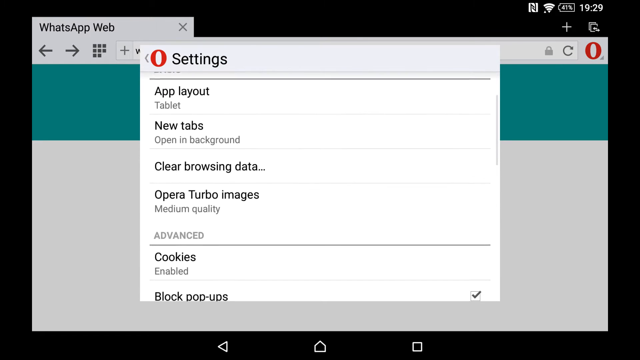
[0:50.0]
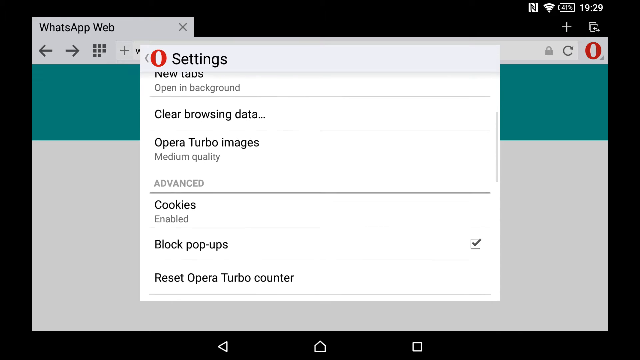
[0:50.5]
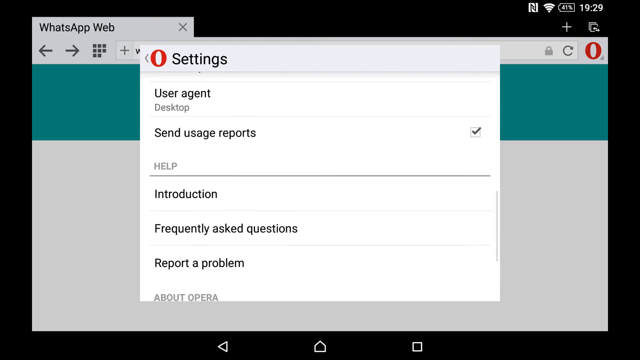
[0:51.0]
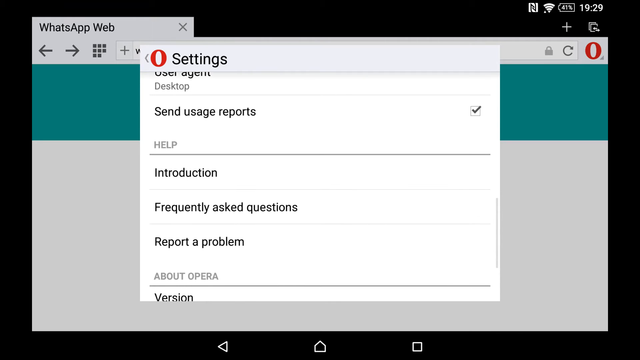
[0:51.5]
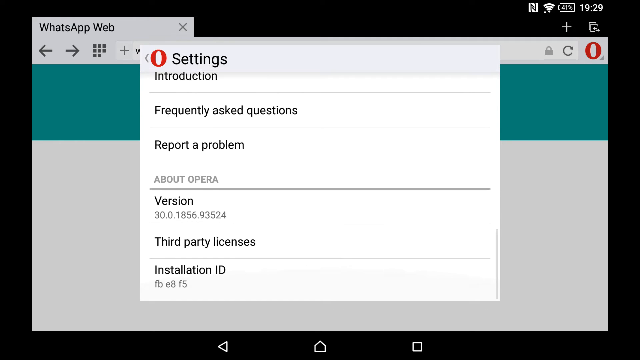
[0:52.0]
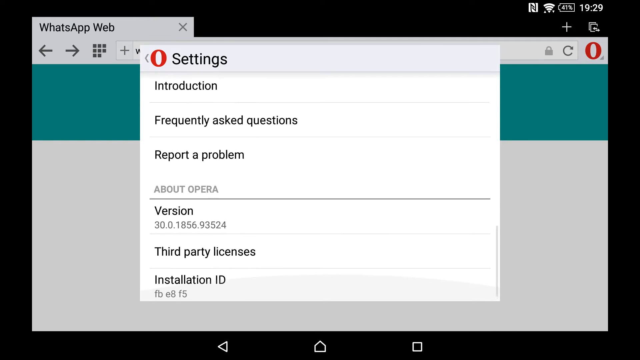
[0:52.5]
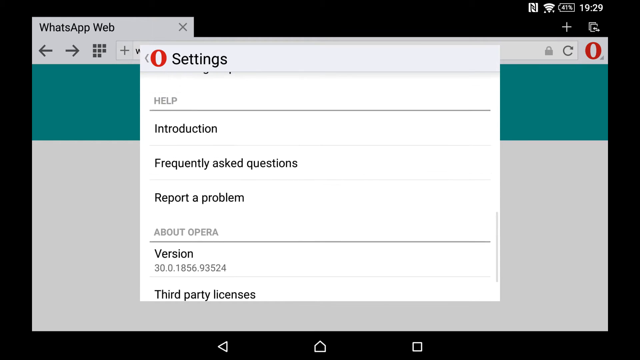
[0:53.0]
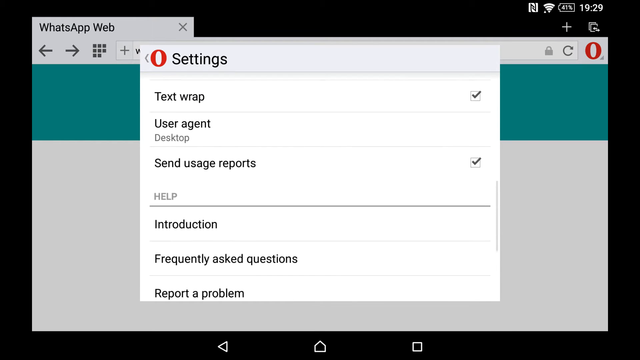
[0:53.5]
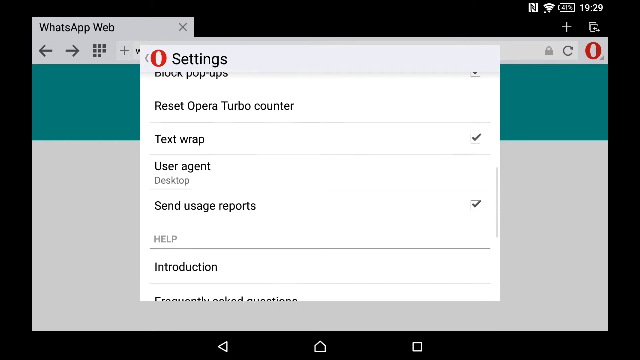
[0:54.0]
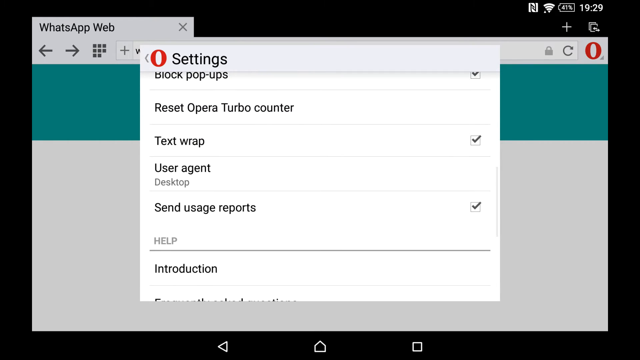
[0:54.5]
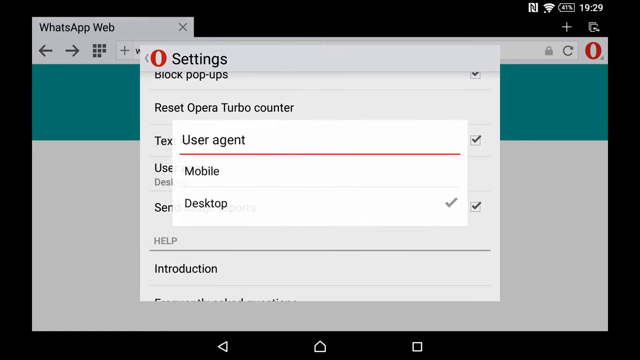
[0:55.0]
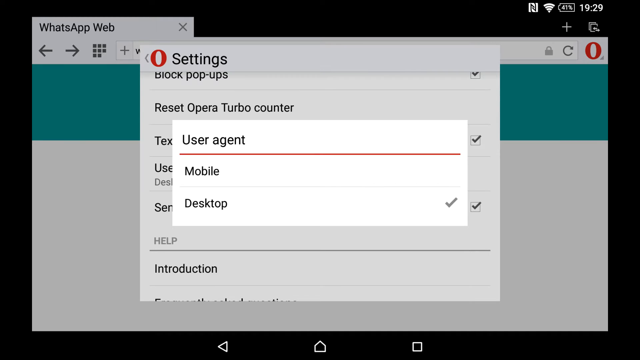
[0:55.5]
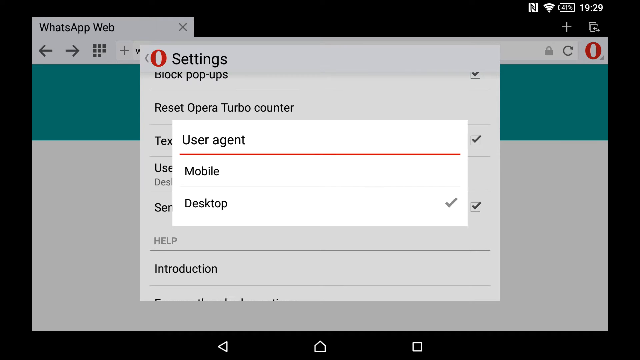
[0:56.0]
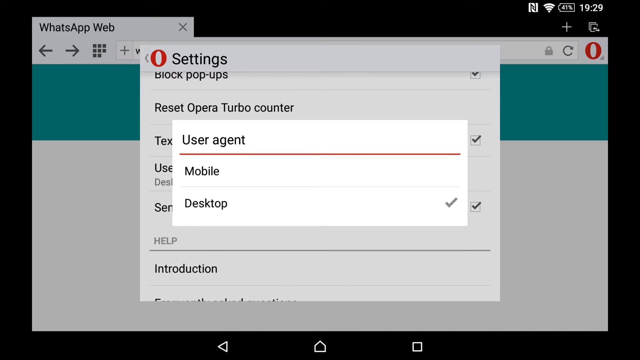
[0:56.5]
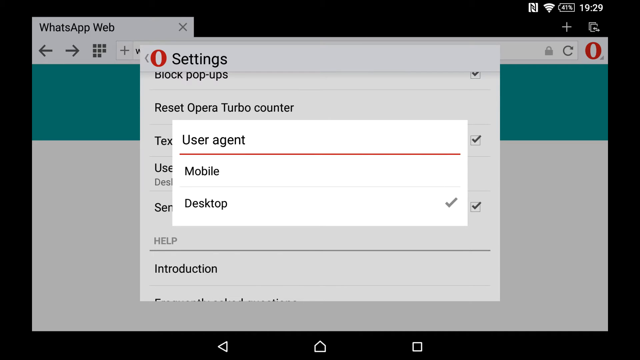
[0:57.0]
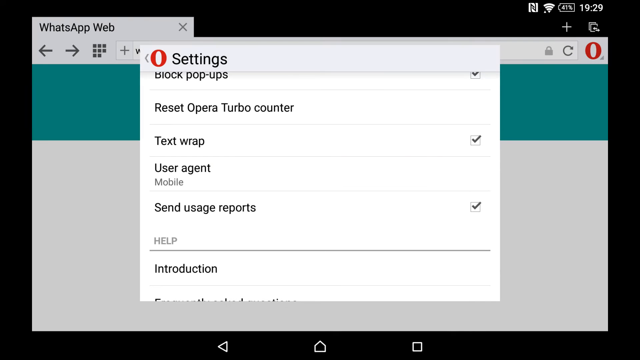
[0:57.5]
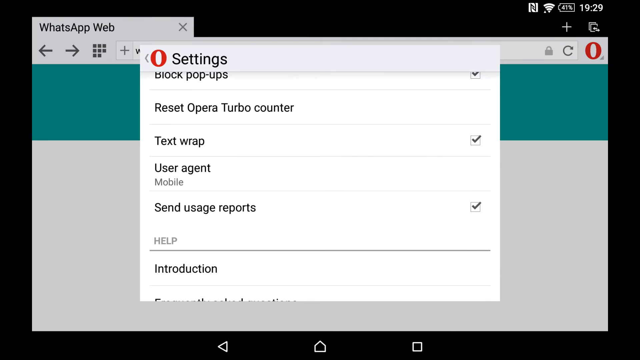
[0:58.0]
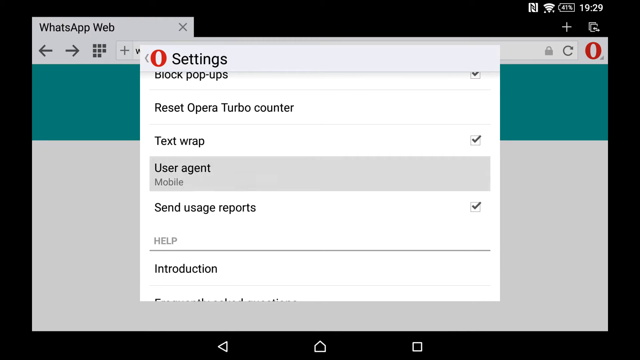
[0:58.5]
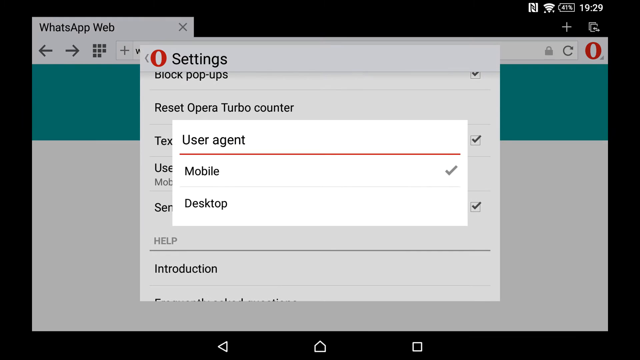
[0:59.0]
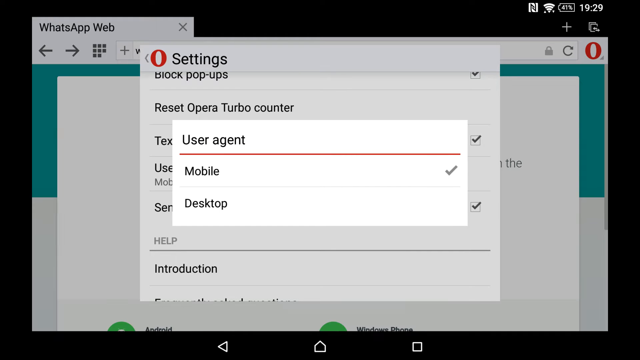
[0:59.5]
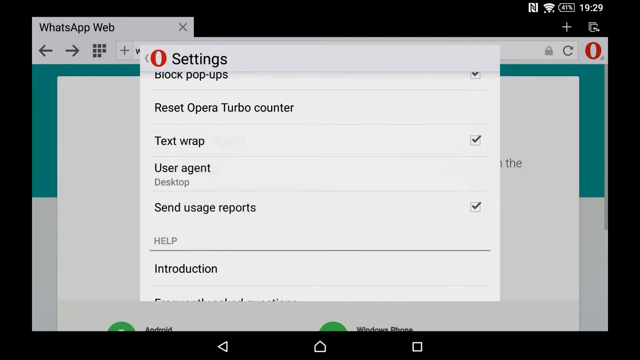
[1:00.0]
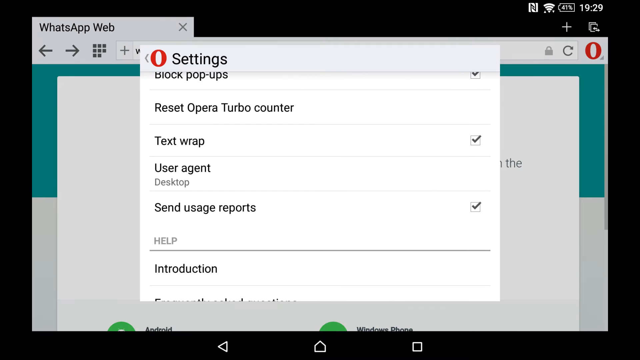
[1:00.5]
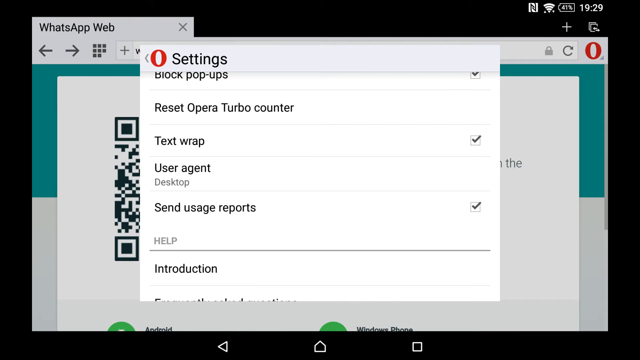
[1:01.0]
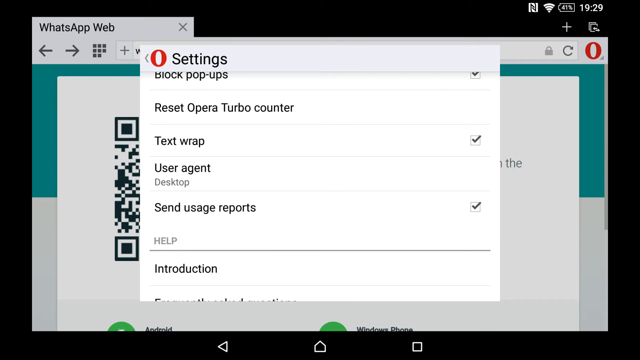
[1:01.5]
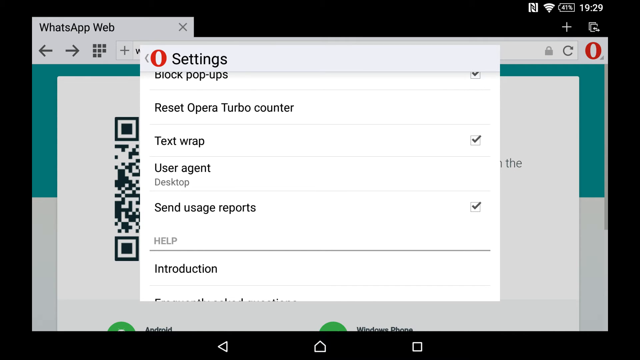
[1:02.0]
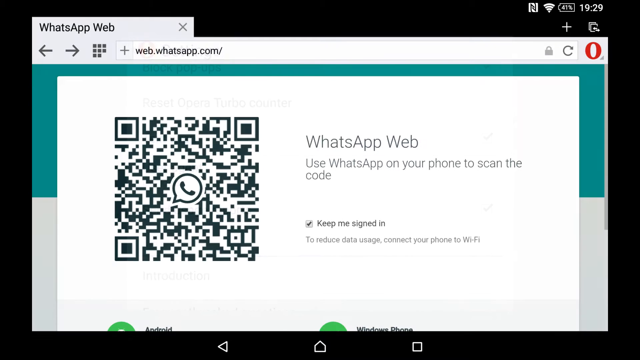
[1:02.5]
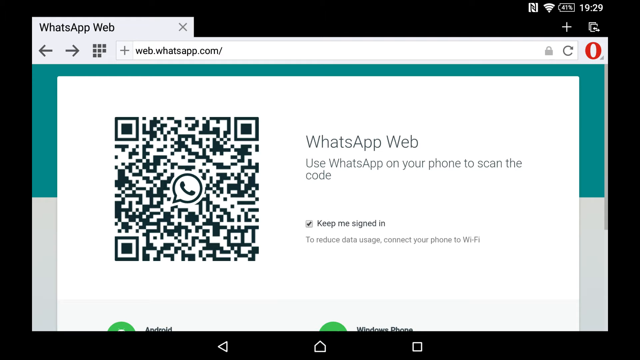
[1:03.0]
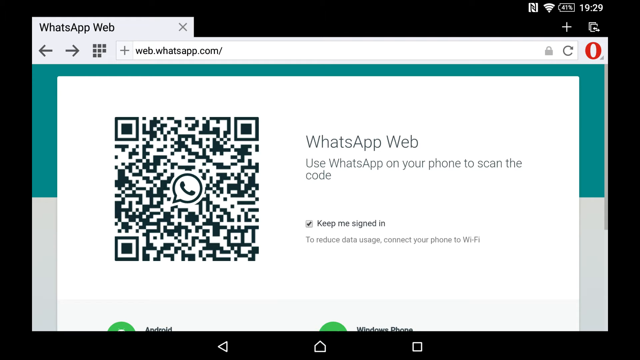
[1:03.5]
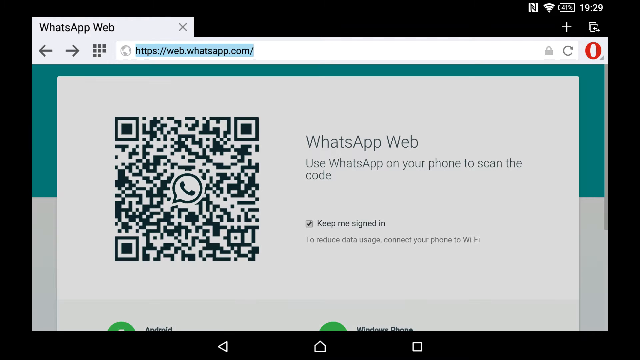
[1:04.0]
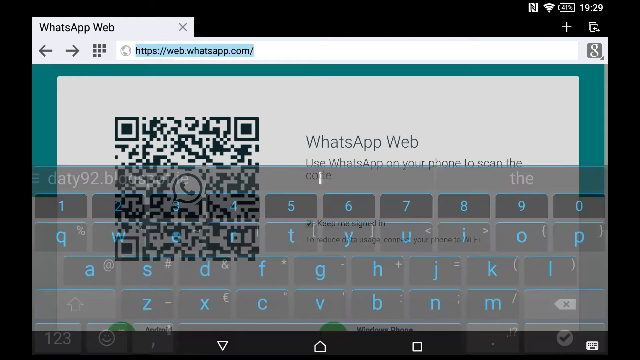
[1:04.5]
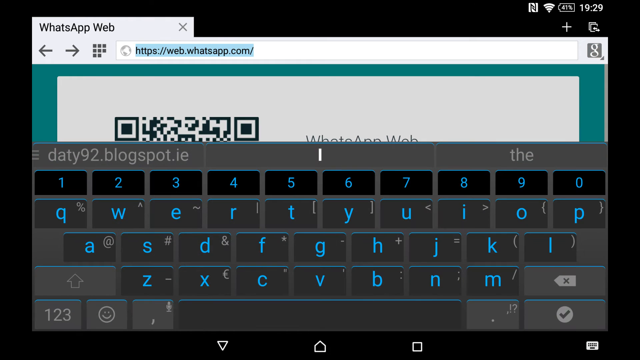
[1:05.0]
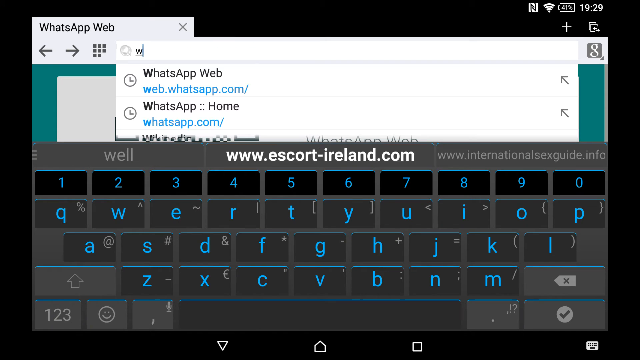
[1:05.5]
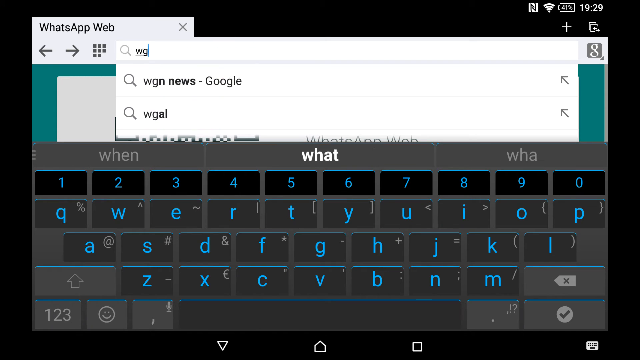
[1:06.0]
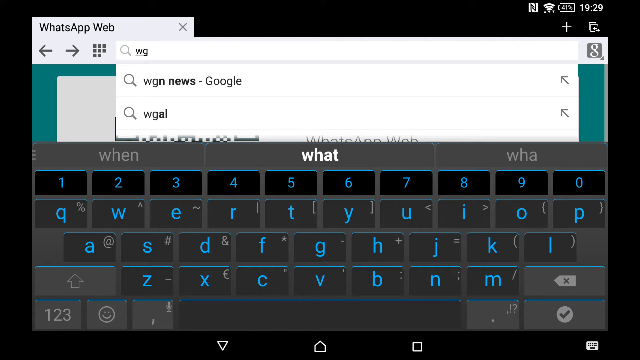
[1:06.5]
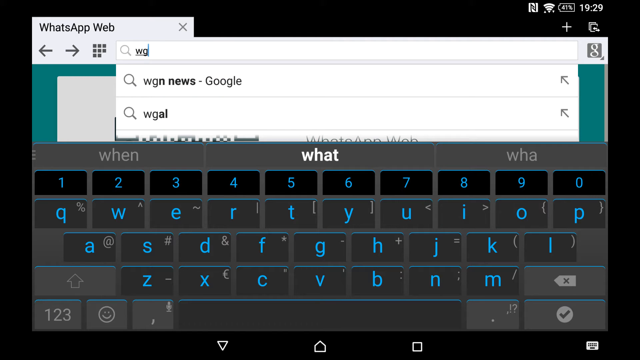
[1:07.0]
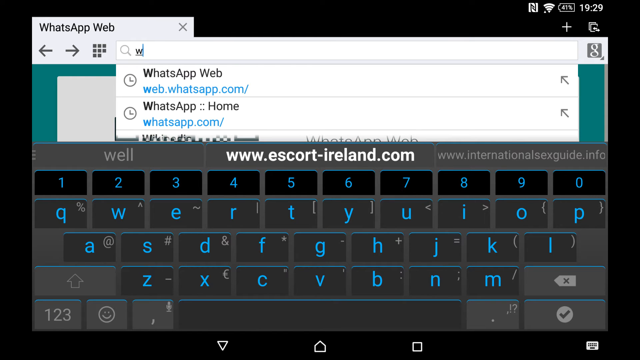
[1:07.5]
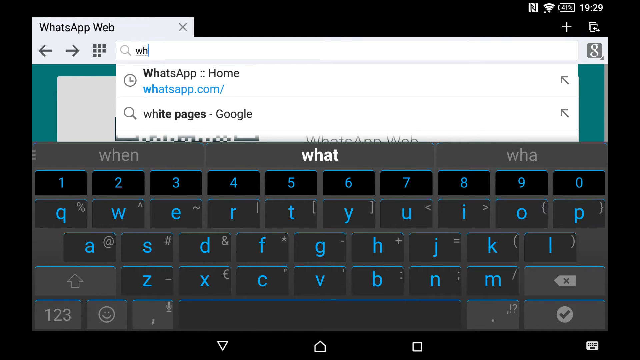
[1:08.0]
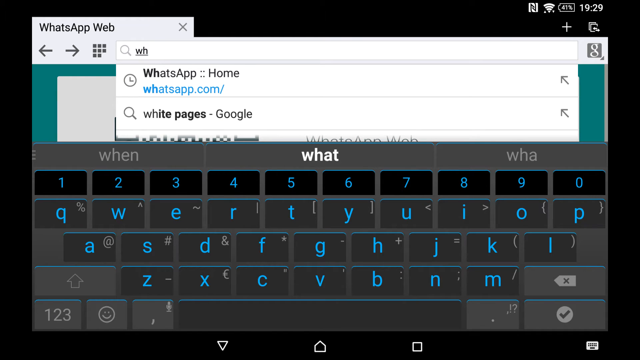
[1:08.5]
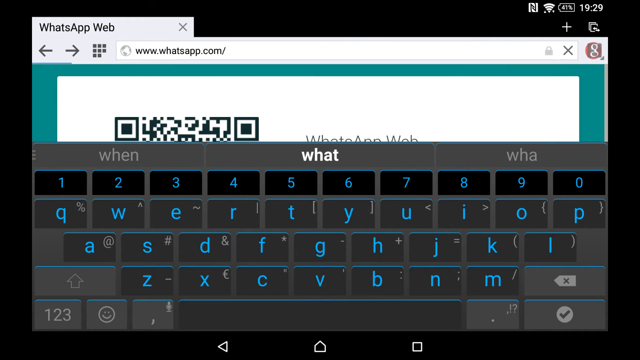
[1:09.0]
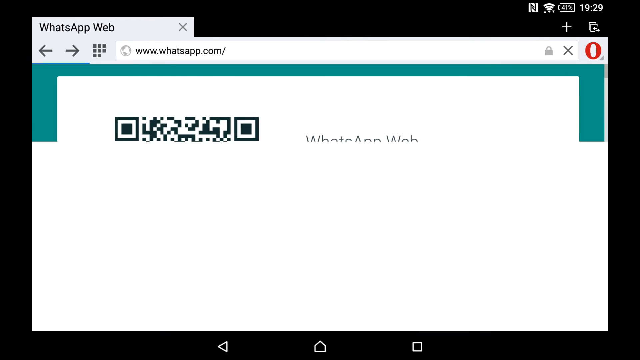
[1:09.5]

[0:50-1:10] The user appears to be setting up to go into WhatsApp and types in "WhatsApp home page." A QR code is showing. Settings appear on screen: "App layout," a tab setting with "open background" under browsing data, and "AquaTurbo images," set to medium quality. An advanced section shows cookies enabled and "block pop-ups," and there appears to be an option to send usage reports. The user goes to help and is inside the user agent section, seemingly trying to get set up to use the QR code. They type in WhatsApp again, apparently to reach the actual WhatsApp page. Frequently asked questions appear, and the user moves between the mobile and desktop versions and types again, seemingly setting up the Opera app for WhatsApp so the settings carry over between Opera and WhatsApp.